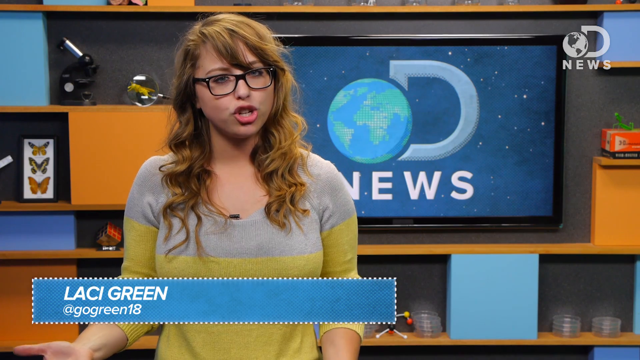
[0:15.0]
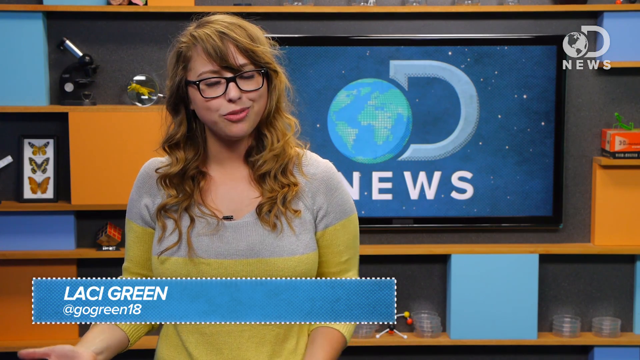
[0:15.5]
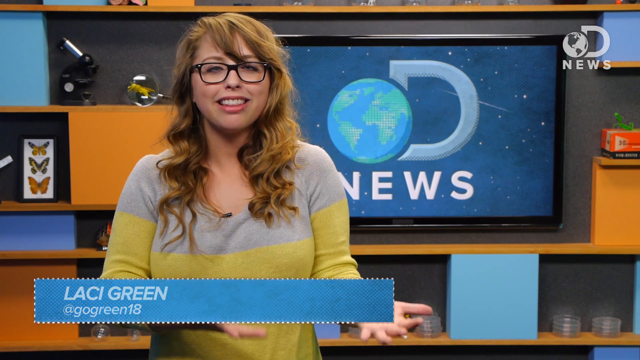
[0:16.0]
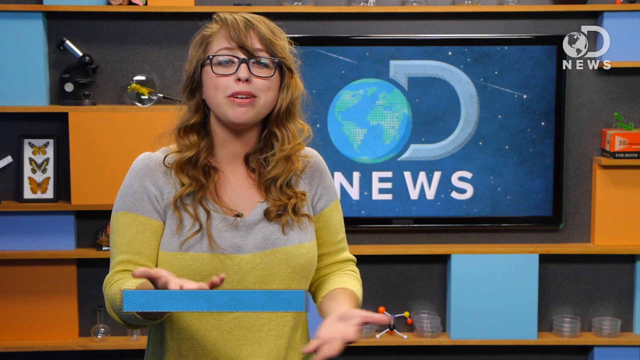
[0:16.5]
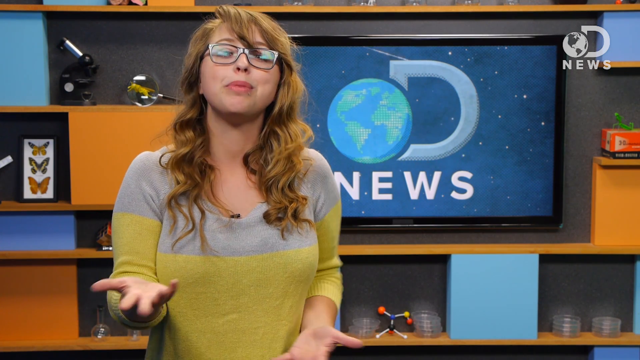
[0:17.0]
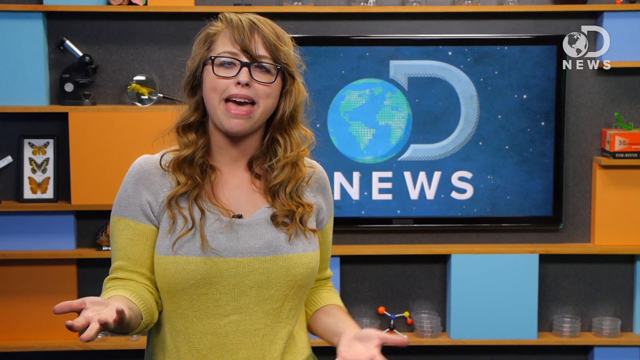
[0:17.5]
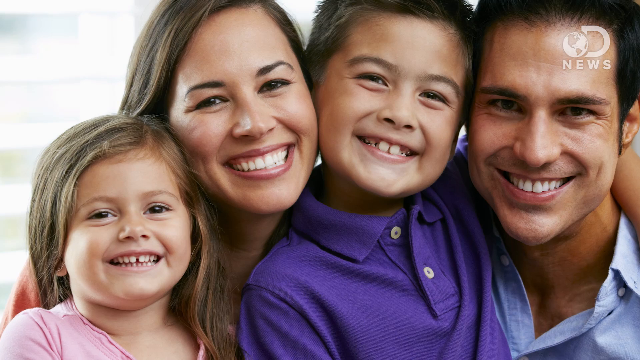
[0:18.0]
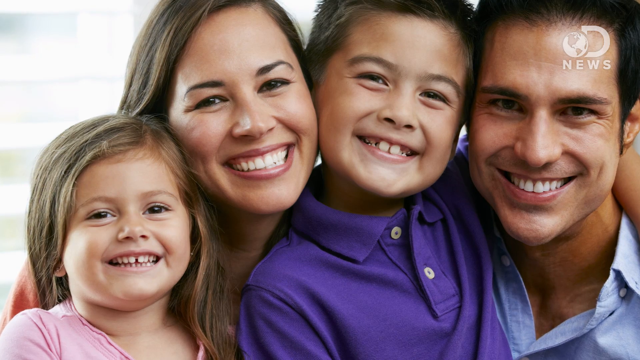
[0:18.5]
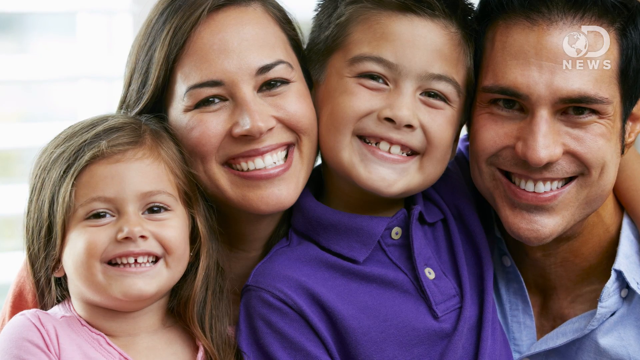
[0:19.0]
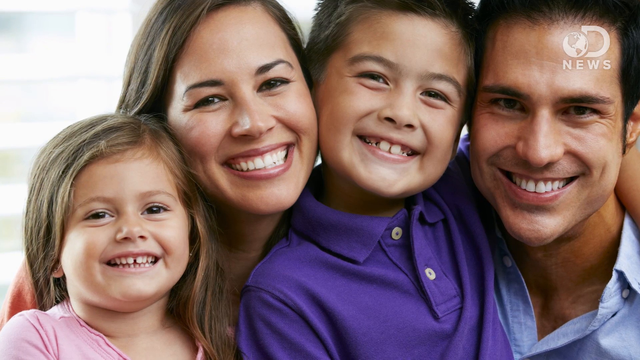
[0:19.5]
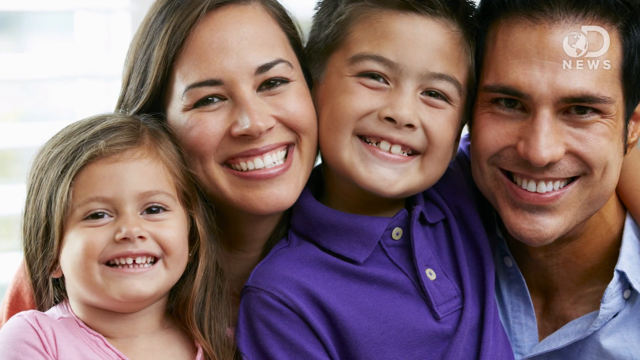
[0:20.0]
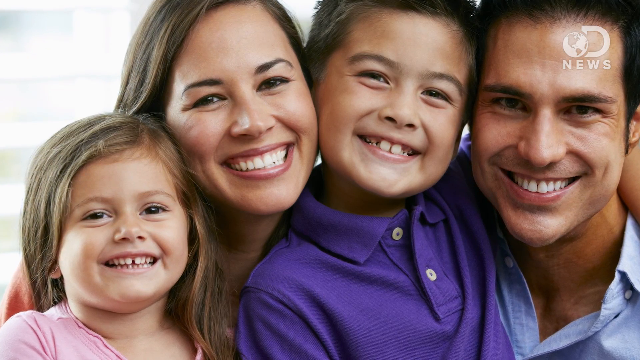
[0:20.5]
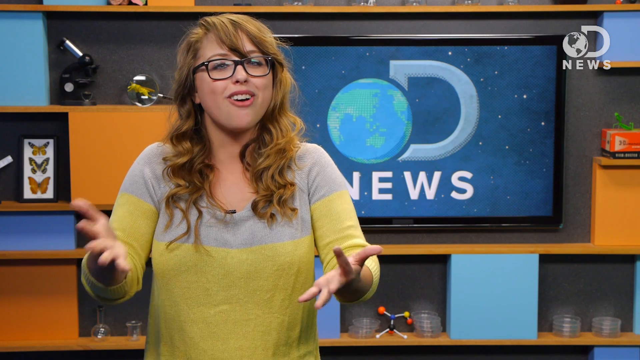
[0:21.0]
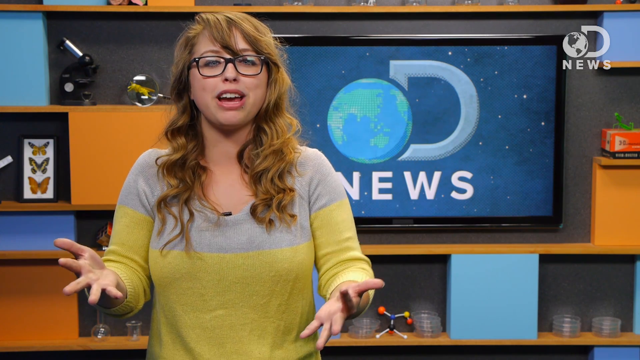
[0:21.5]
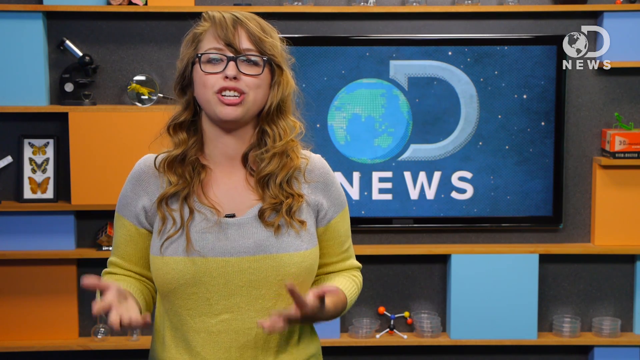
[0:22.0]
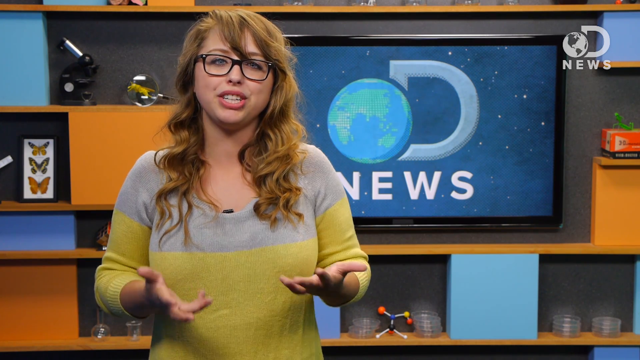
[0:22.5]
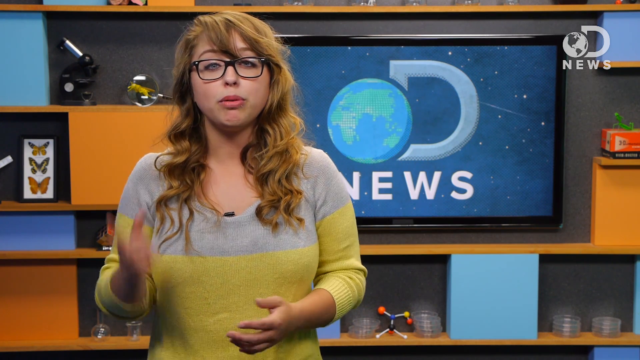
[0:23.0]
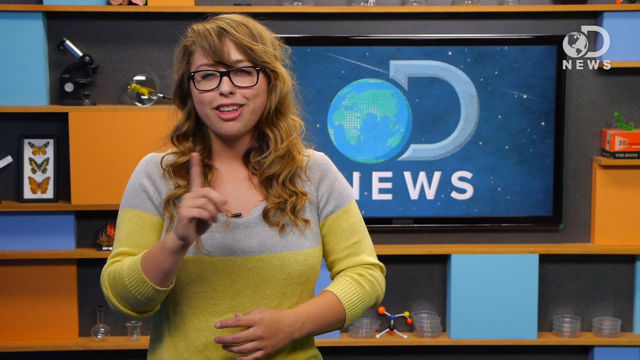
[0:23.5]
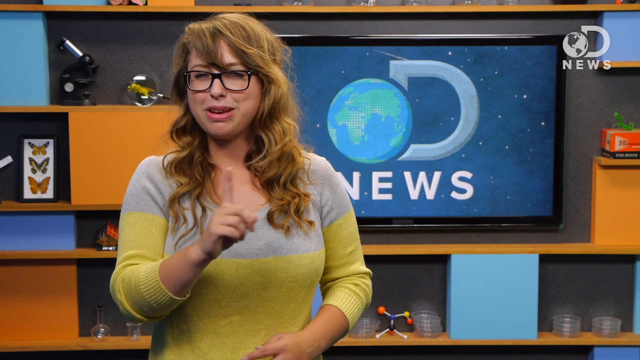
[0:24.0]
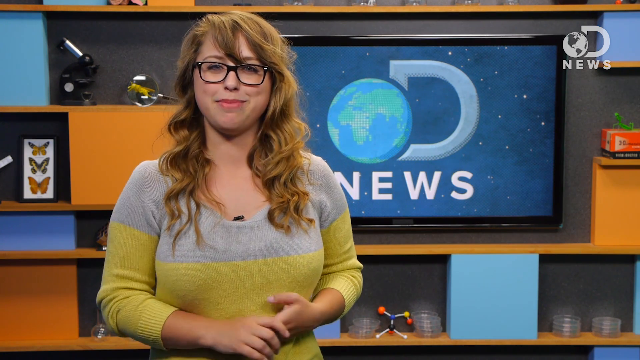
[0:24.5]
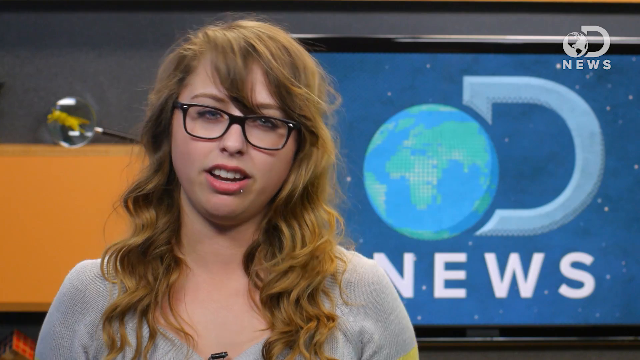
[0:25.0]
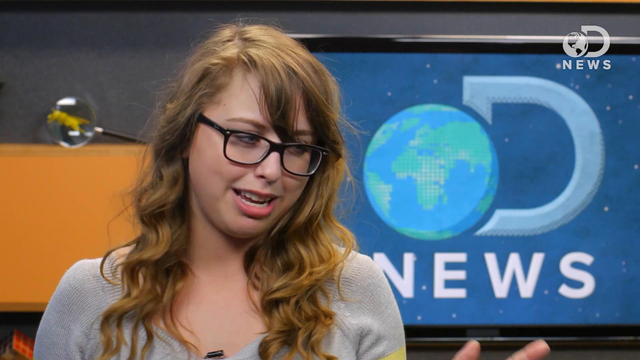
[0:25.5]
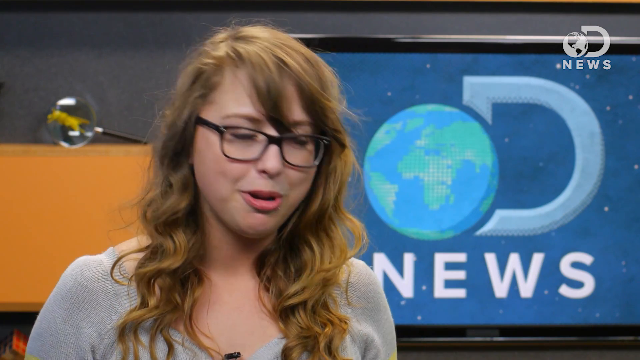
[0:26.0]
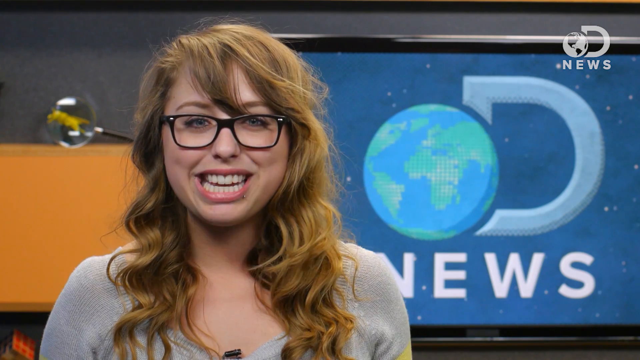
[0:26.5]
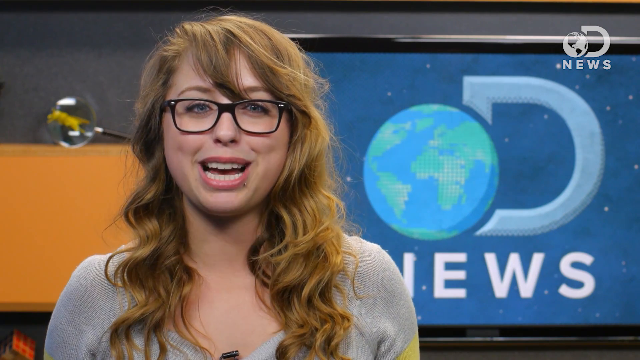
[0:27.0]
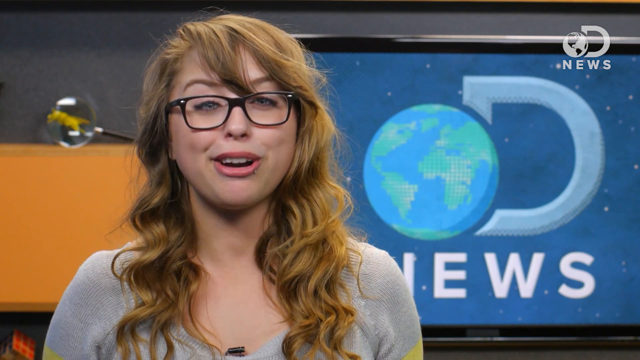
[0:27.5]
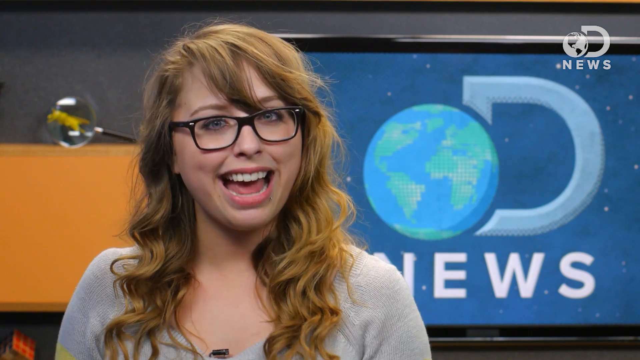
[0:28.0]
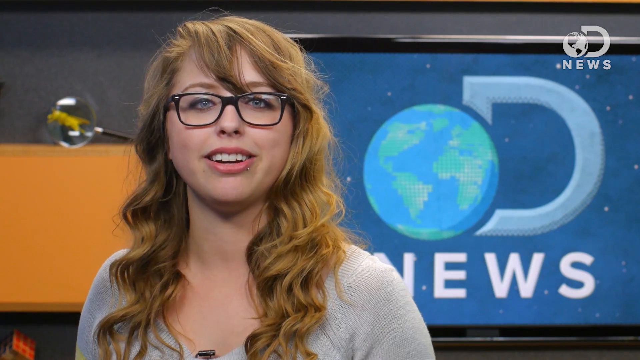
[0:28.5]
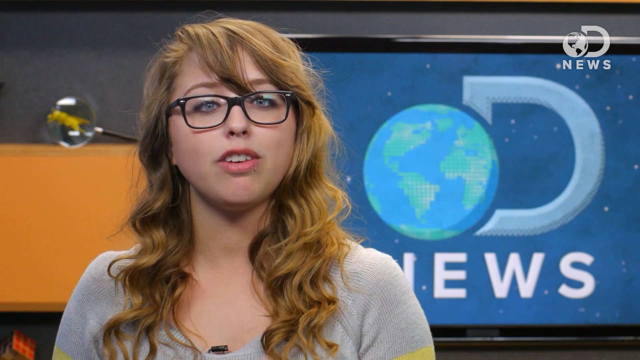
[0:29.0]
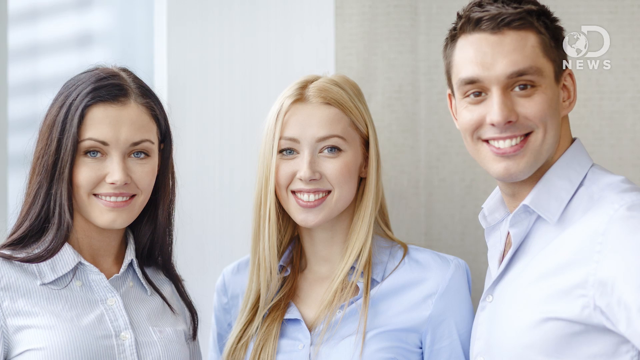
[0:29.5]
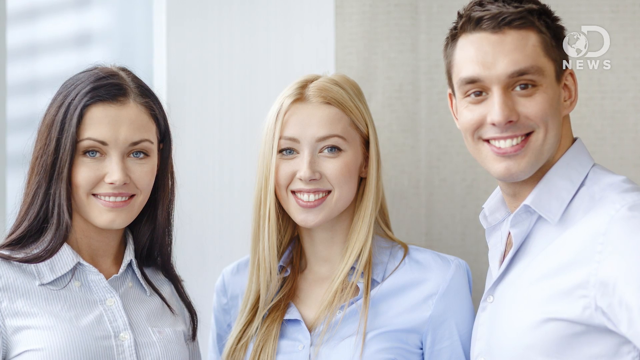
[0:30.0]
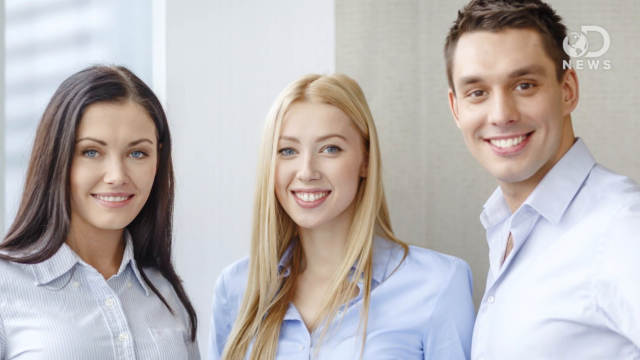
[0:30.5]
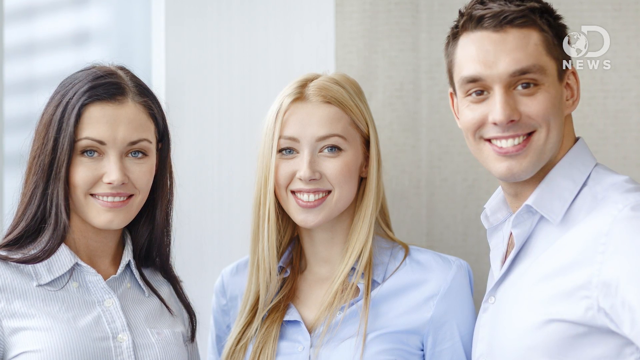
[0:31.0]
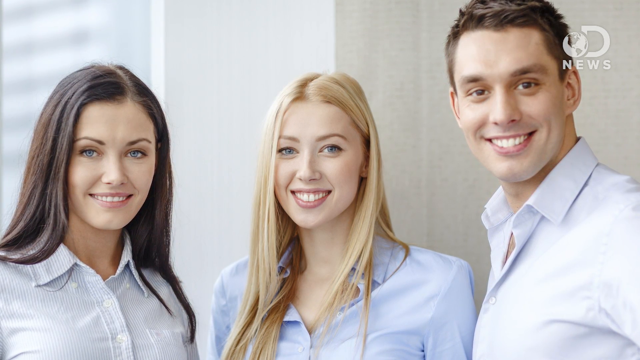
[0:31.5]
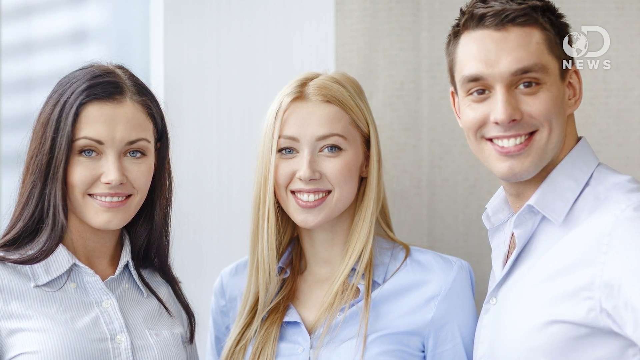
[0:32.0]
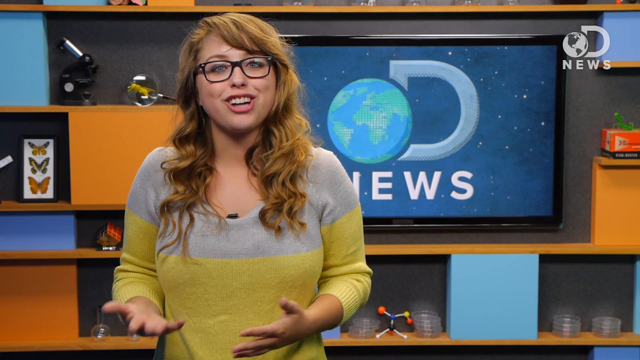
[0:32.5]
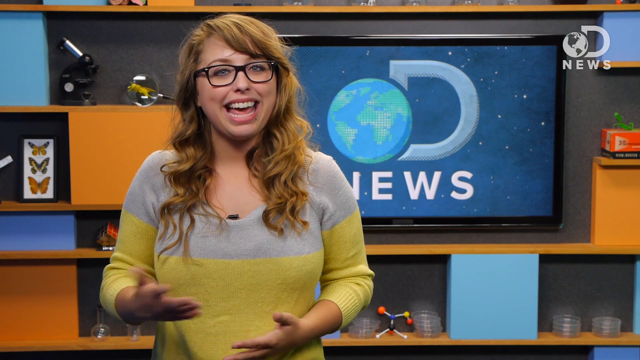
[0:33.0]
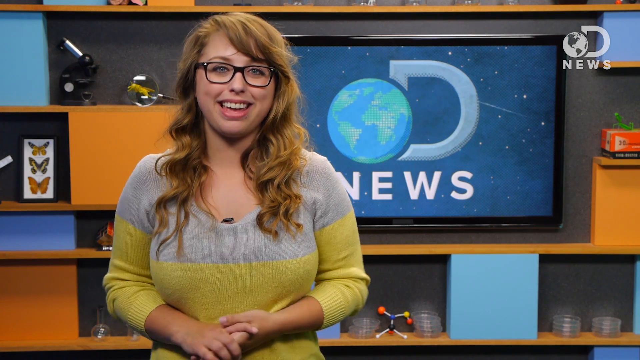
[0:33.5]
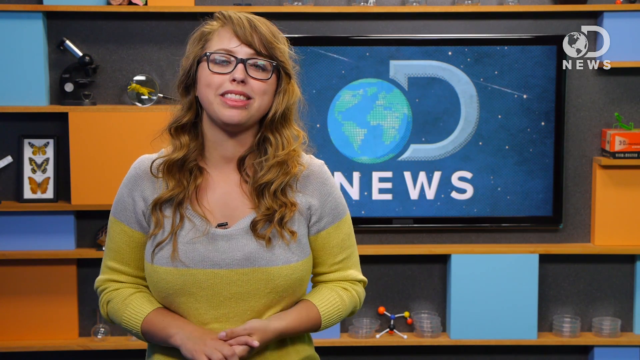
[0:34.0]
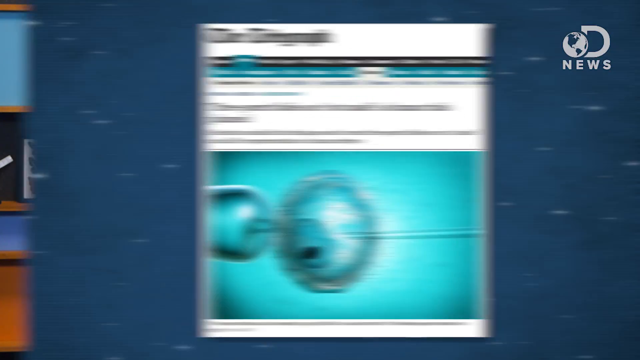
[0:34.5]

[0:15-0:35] The reporter continues to talk. The scene changes to what looks like a stock photo of a family: two parents and two children, all hugging. It returns to the reporter, who talks expressively and holds up one finger, and the camera pans in on her. Next comes another image, which looks like a stock photo or AI, of three people, probably representing the three biological parents: two women and one man, with no babies. One woman has dark hair and the other has blonde hair; the man has dark hair. All wear light or white shirts and look at the camera, smiling. The video goes back to the reporter talking, and then a news article flashes on the screen reading "three parent babies are not unsafe as human trials planned."